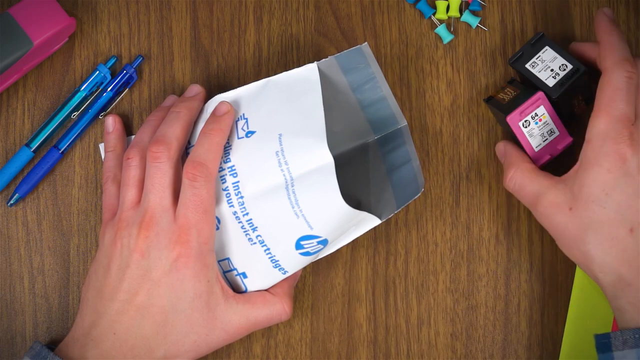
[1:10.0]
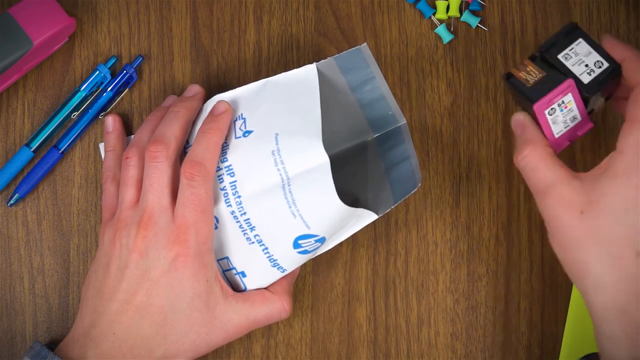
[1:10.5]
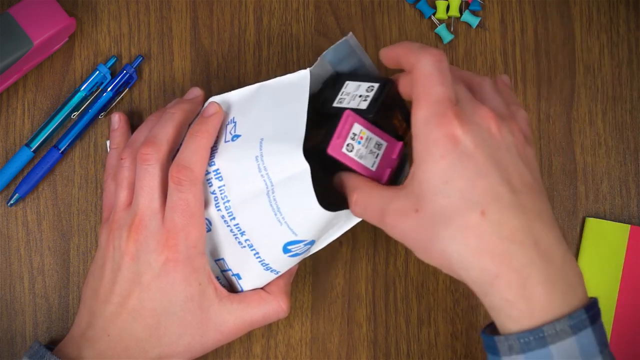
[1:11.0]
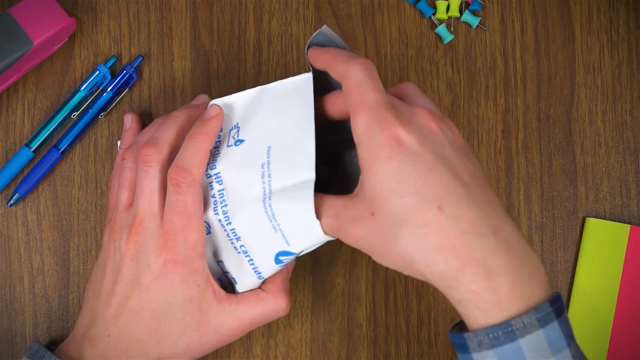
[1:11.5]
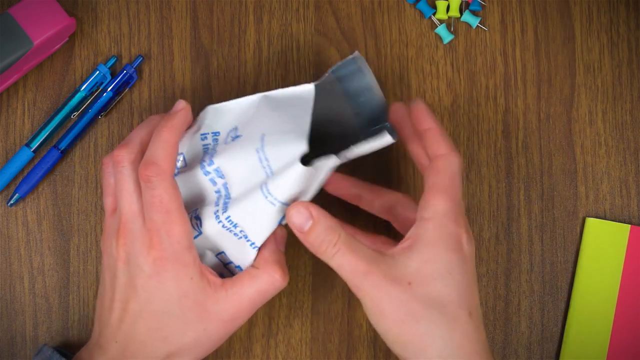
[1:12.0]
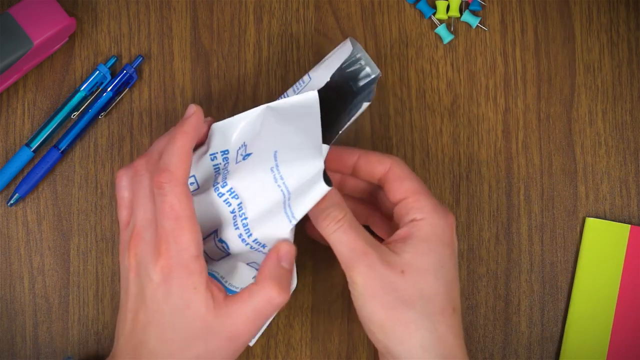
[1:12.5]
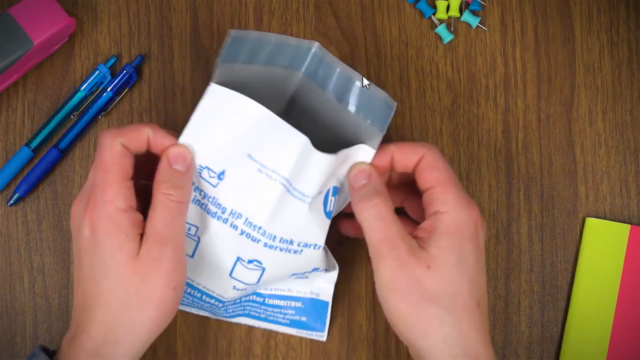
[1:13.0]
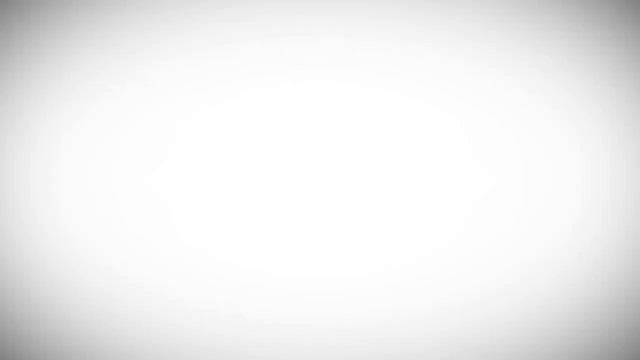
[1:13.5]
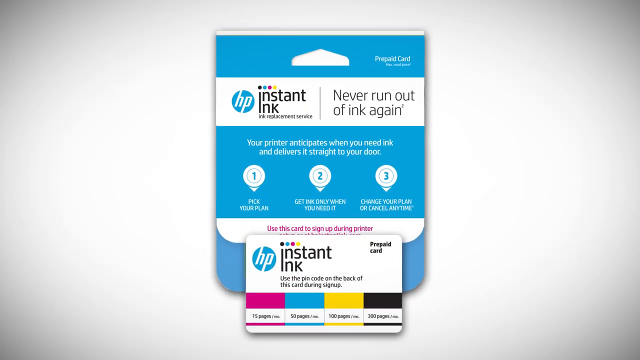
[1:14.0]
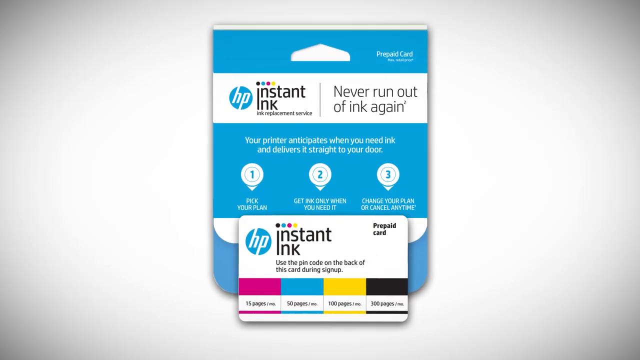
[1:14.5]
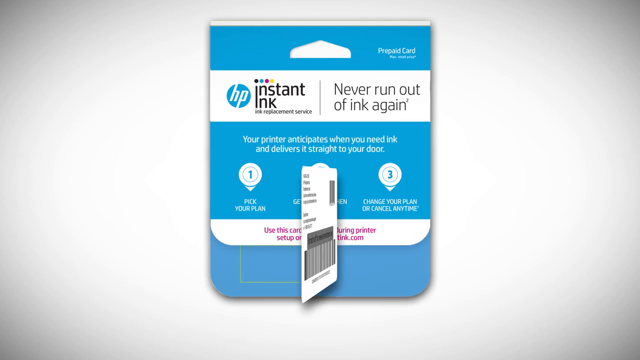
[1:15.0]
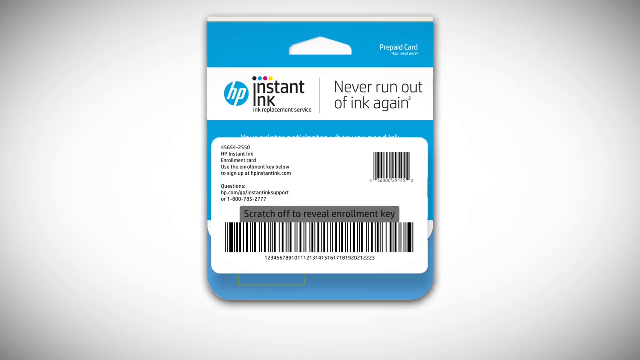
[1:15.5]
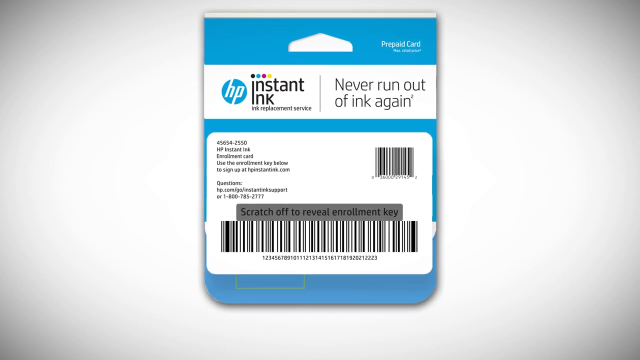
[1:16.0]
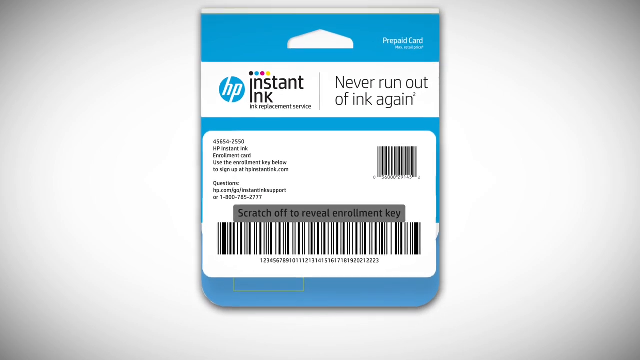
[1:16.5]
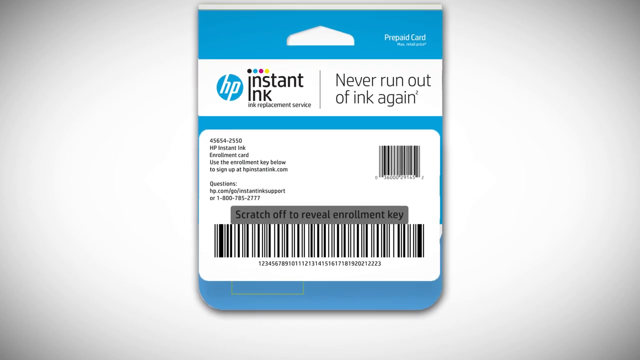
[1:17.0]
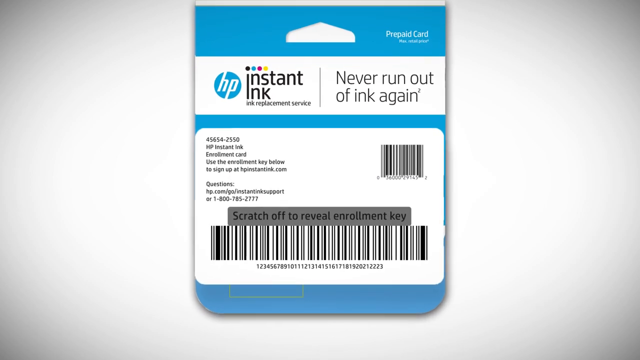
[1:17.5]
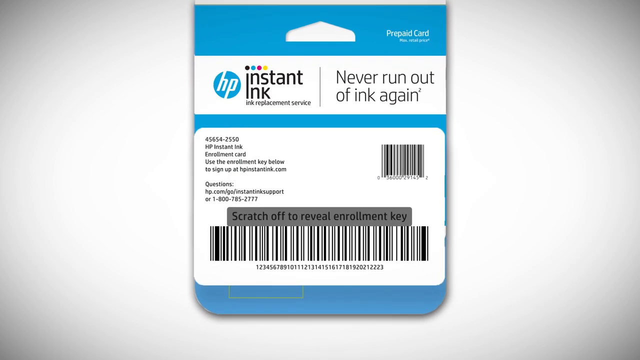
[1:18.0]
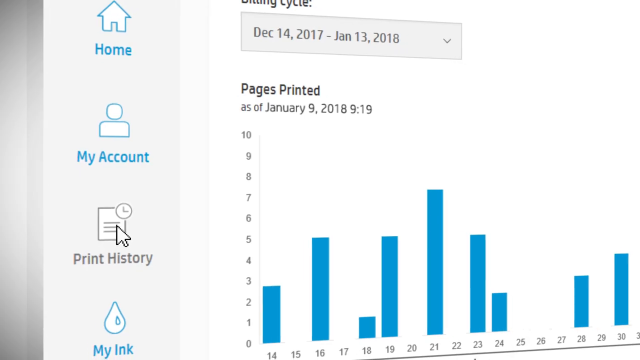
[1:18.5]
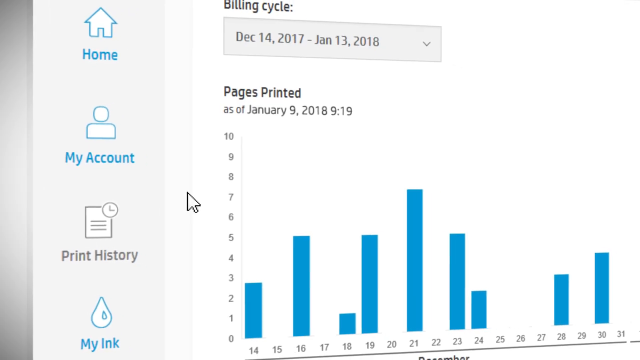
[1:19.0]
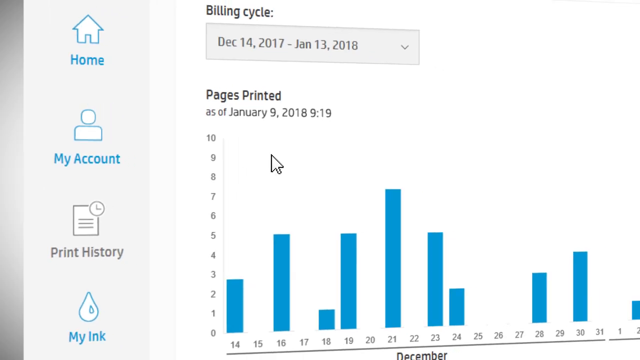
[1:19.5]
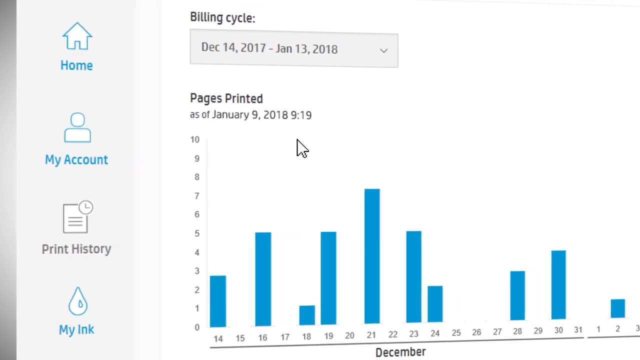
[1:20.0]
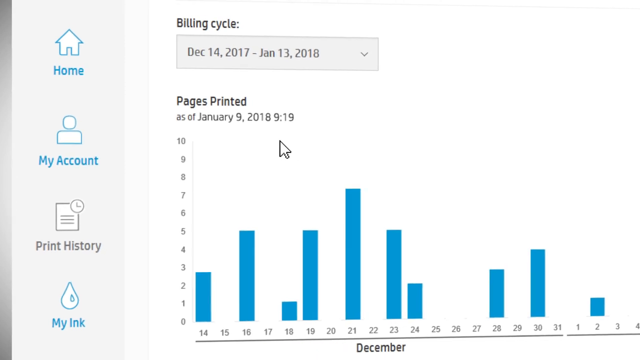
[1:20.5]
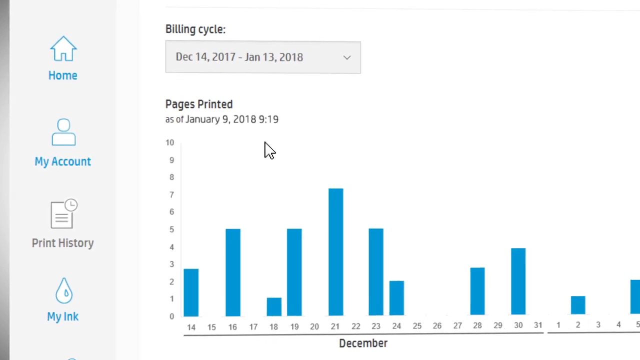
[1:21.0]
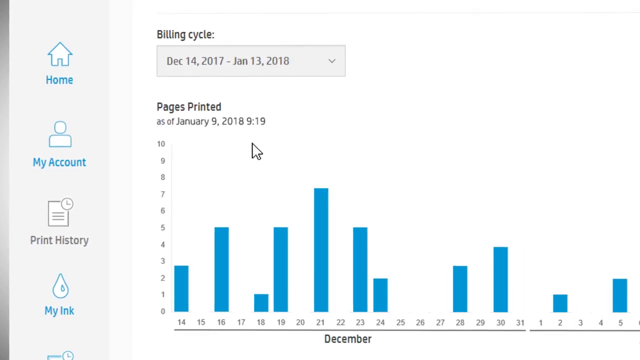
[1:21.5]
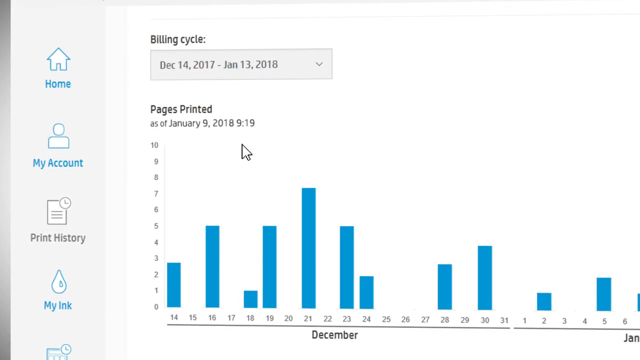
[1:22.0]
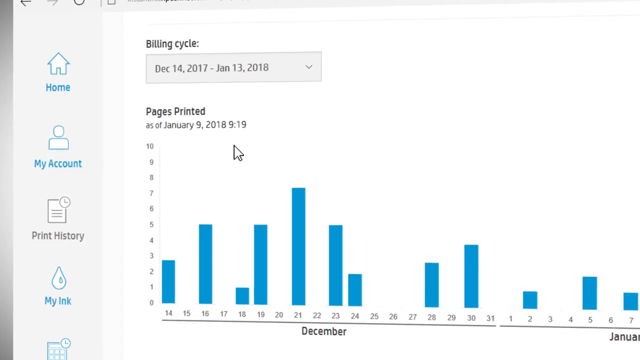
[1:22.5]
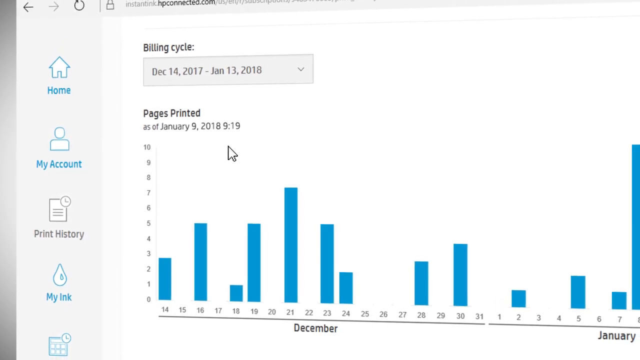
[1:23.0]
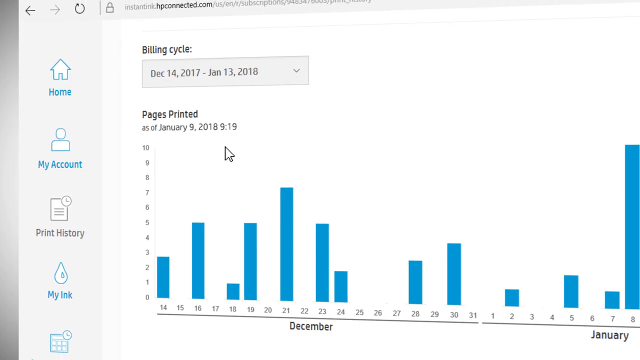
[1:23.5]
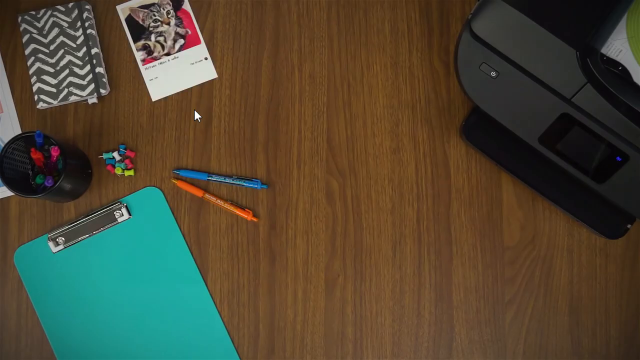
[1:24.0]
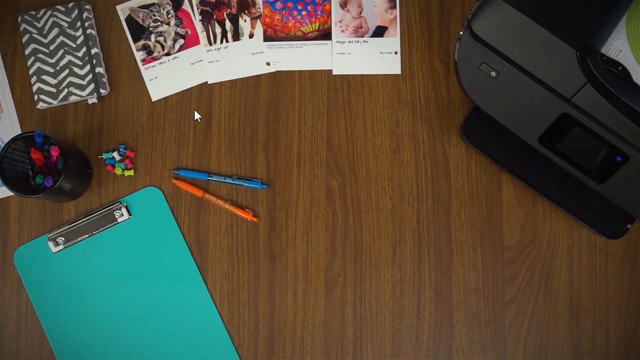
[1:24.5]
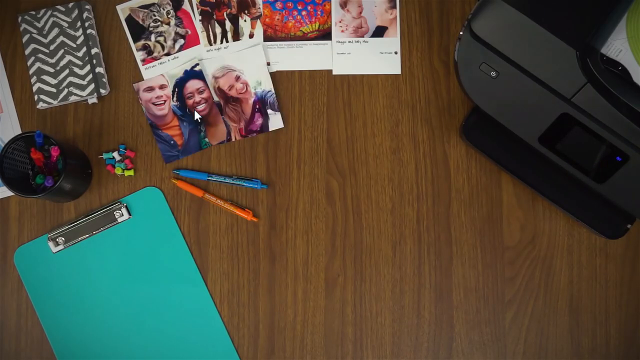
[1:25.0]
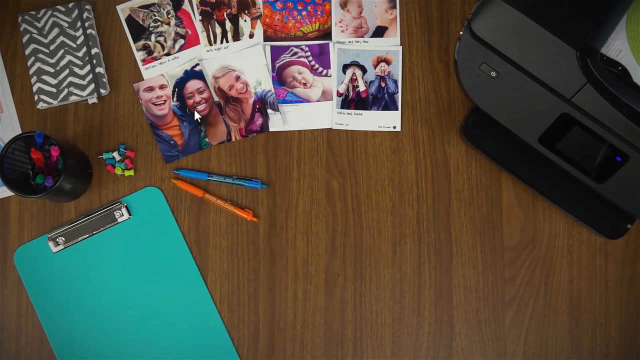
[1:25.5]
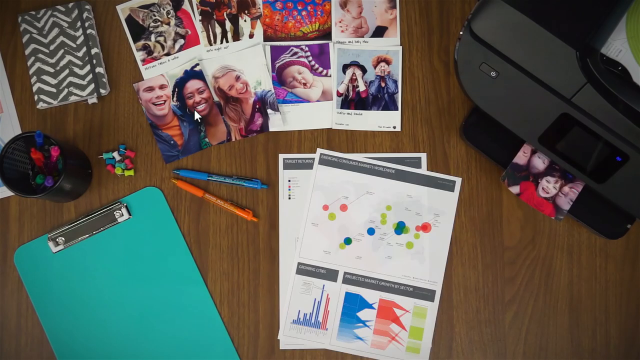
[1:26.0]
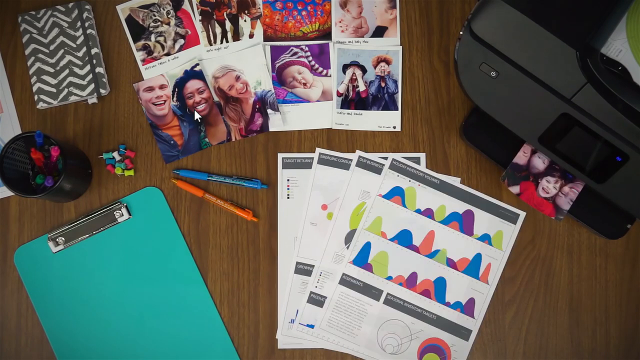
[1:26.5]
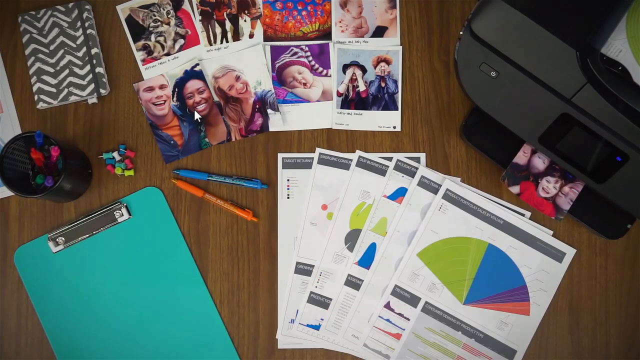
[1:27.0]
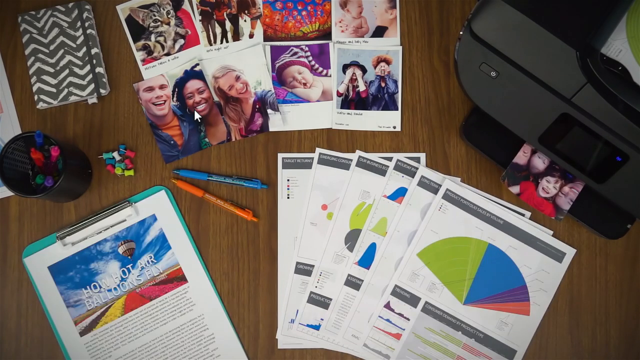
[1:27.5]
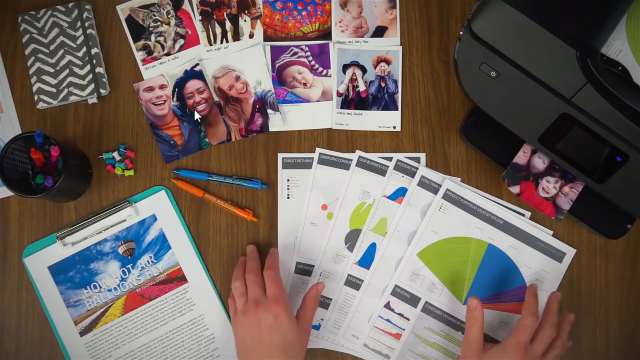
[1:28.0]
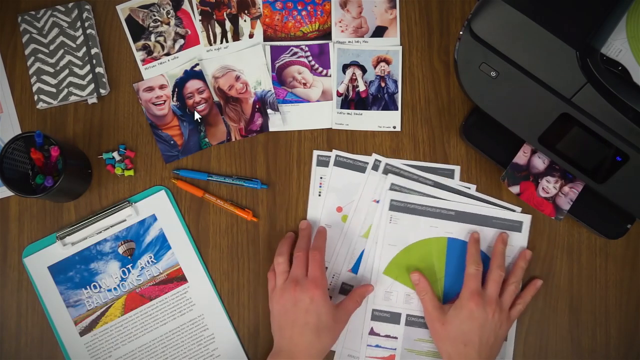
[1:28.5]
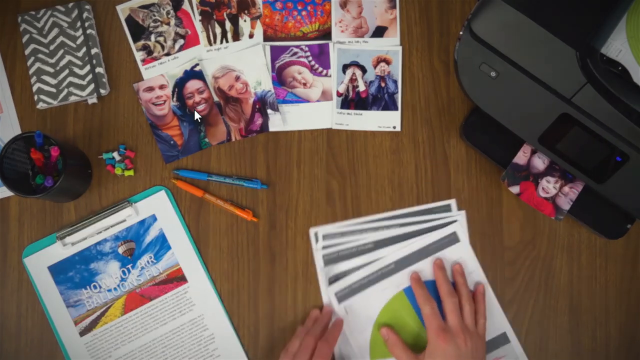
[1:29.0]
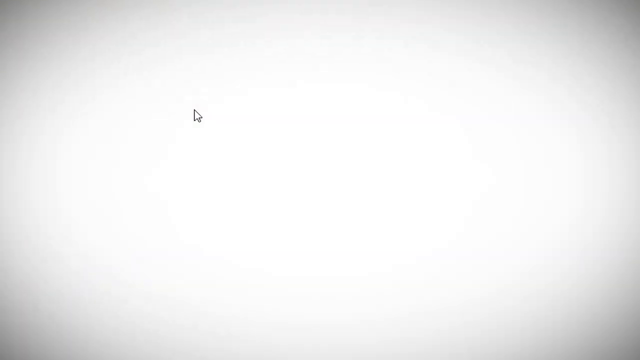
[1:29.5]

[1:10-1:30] The person puts the pink and black cartridges away. Then a picture of the HP Instant Ink gift card appears, showing the balances left on the card and the way to pay for ink in the future. Pictures follow of families at their desks sharing memories. Two pens, one blue and one orange, are on the table. Pie graphs and charts are also shown. An HP logo then appears with text saying it is the most affordable way to buy ink. Finally, some pins are on the table, colored blue, turquoise, blue and green, with sharp gray ends.